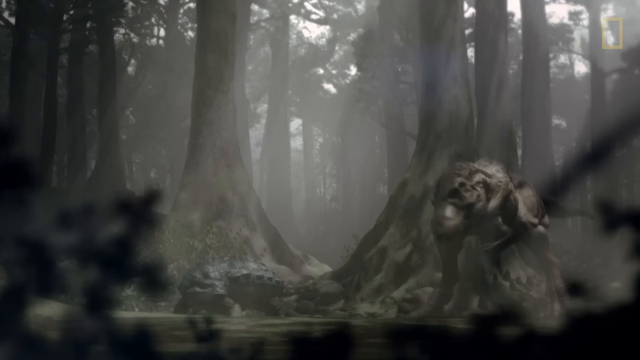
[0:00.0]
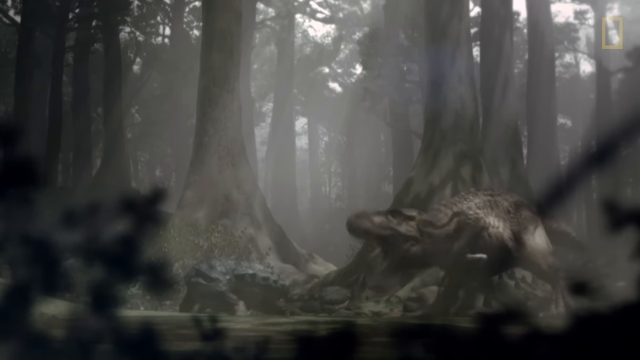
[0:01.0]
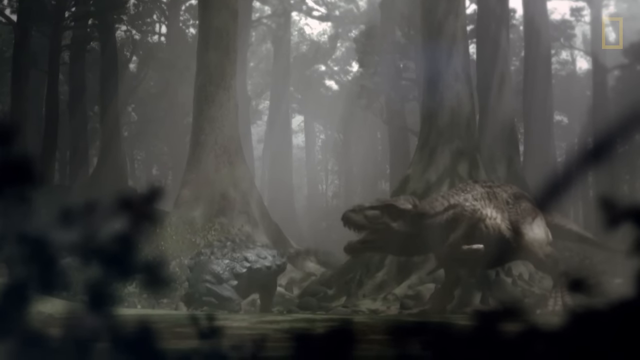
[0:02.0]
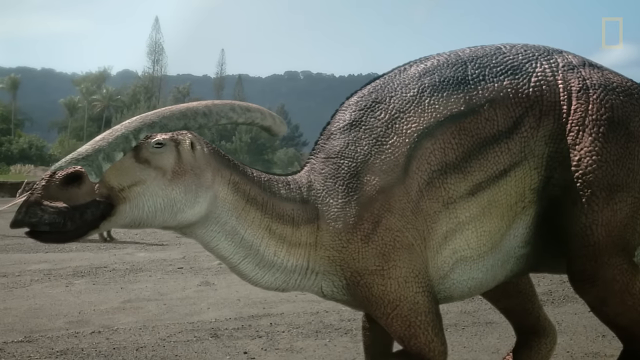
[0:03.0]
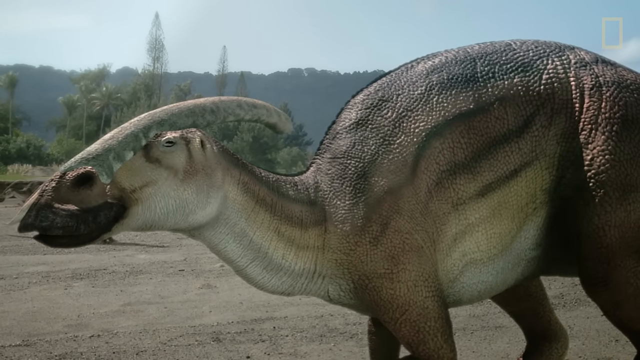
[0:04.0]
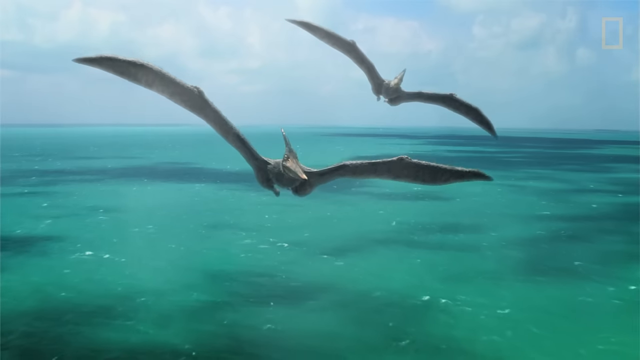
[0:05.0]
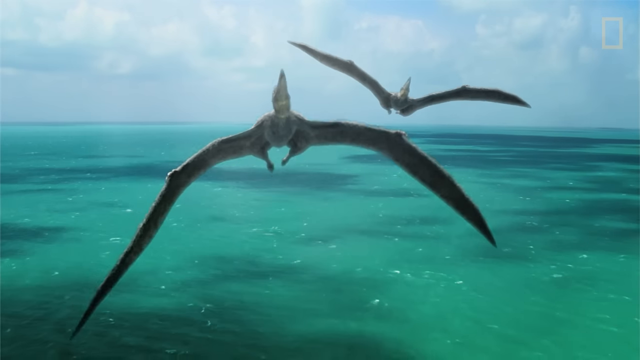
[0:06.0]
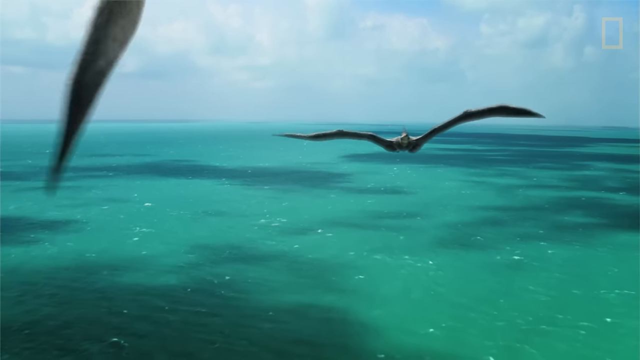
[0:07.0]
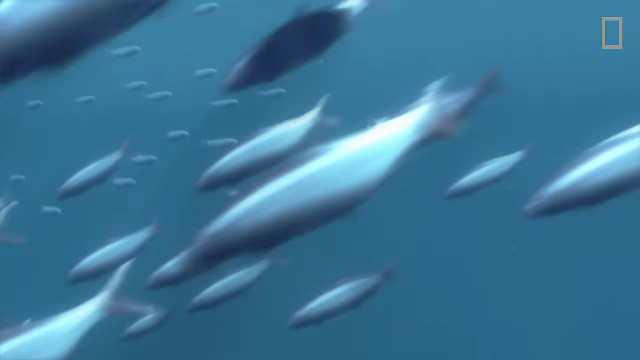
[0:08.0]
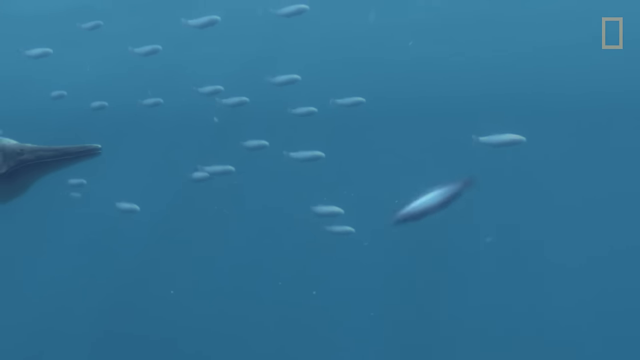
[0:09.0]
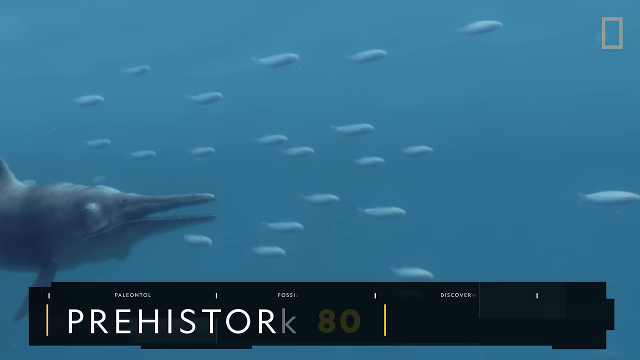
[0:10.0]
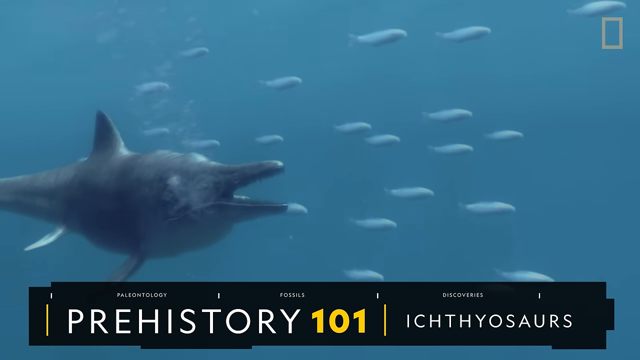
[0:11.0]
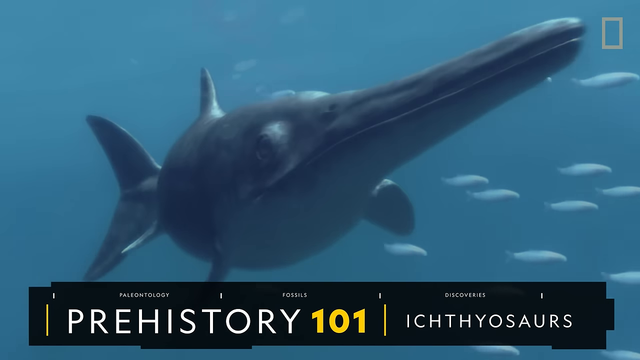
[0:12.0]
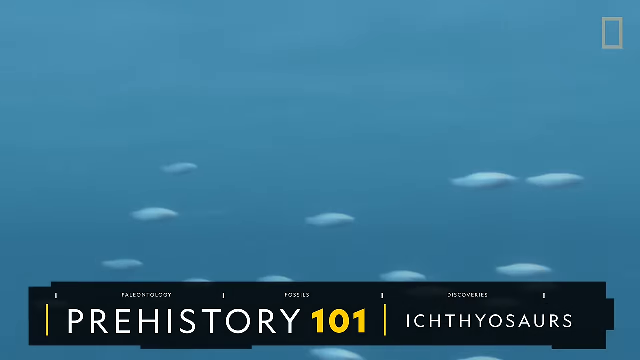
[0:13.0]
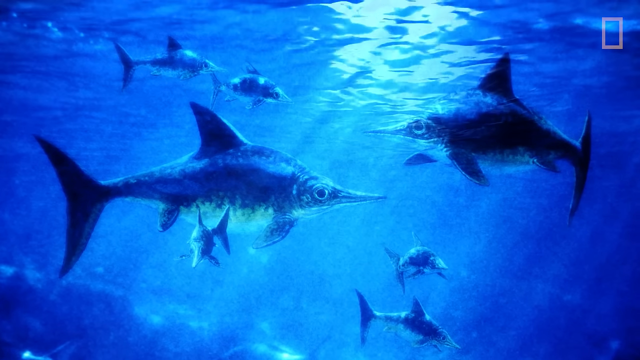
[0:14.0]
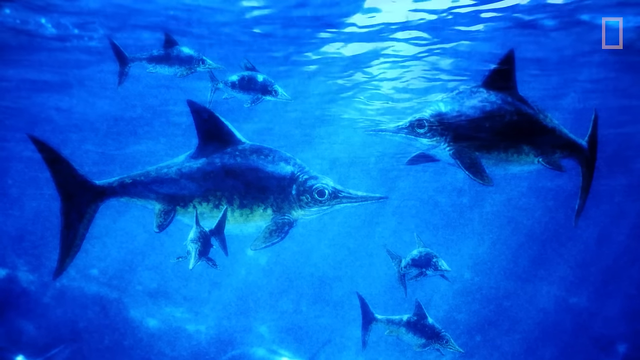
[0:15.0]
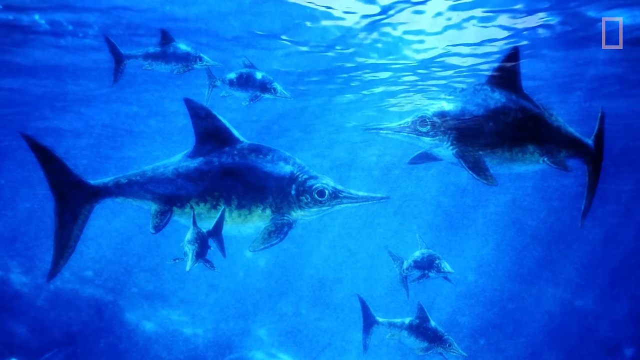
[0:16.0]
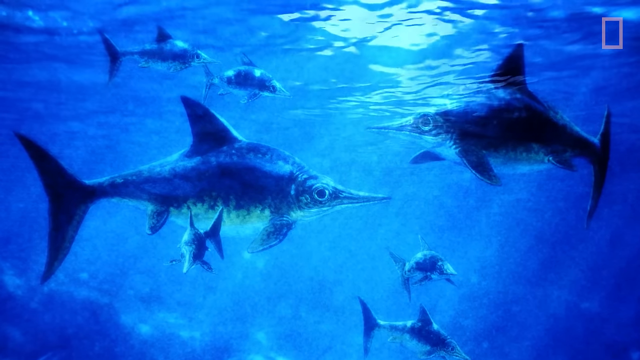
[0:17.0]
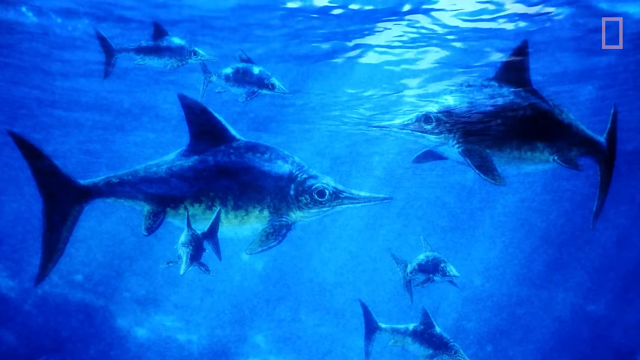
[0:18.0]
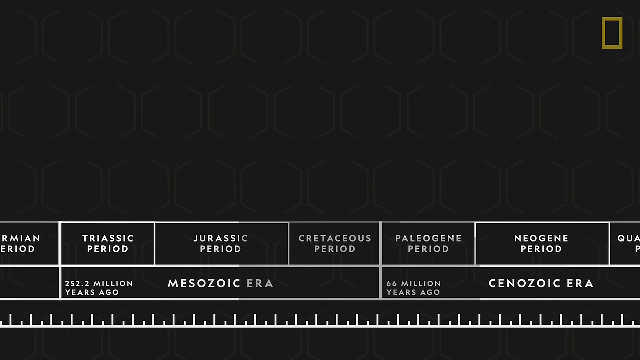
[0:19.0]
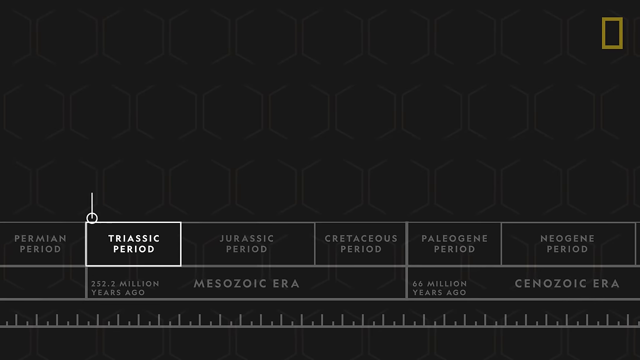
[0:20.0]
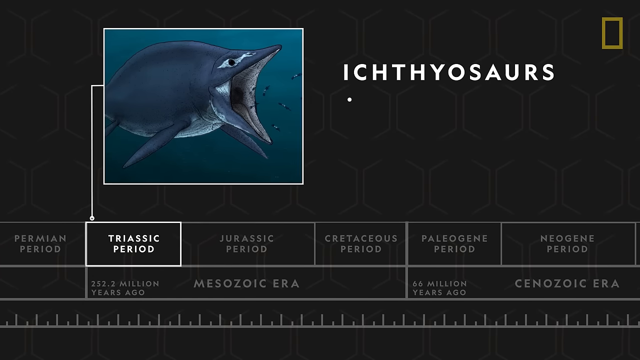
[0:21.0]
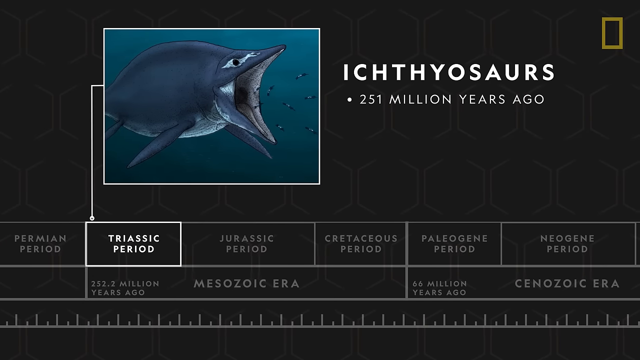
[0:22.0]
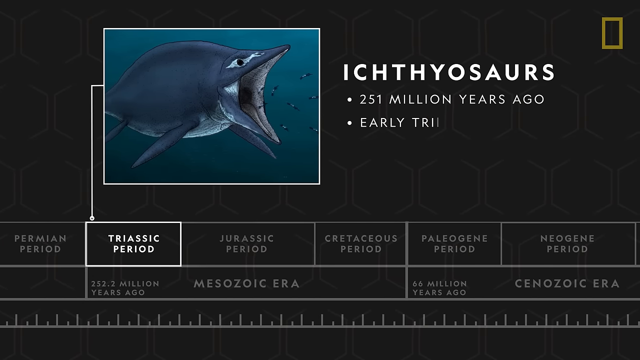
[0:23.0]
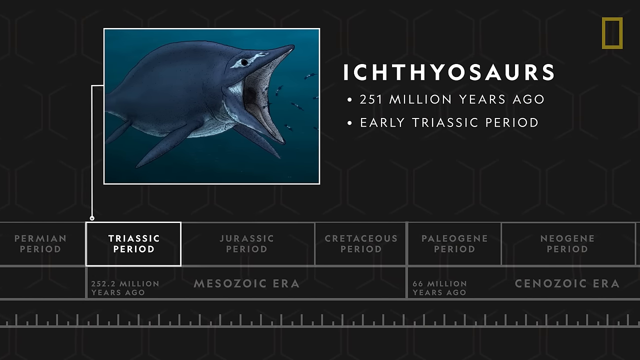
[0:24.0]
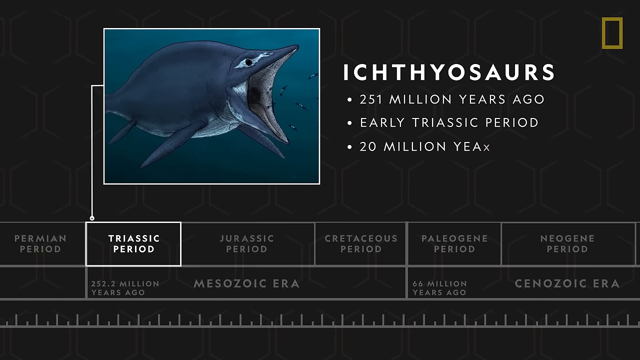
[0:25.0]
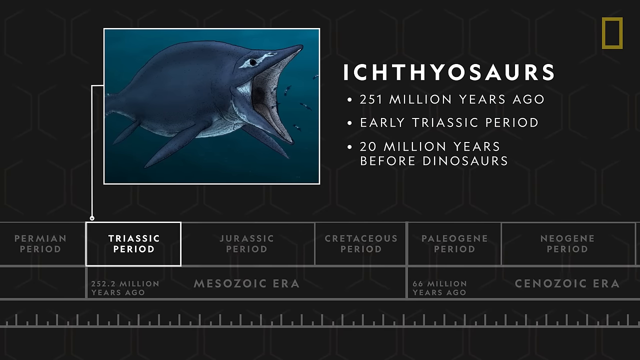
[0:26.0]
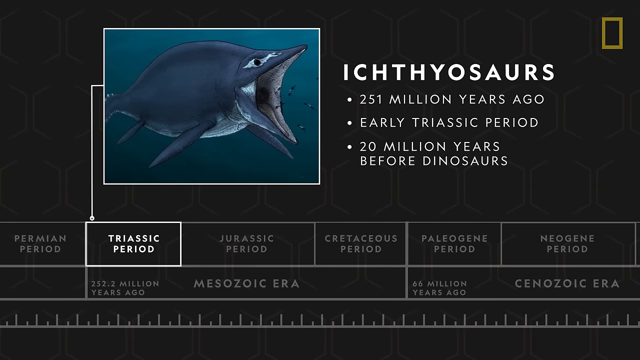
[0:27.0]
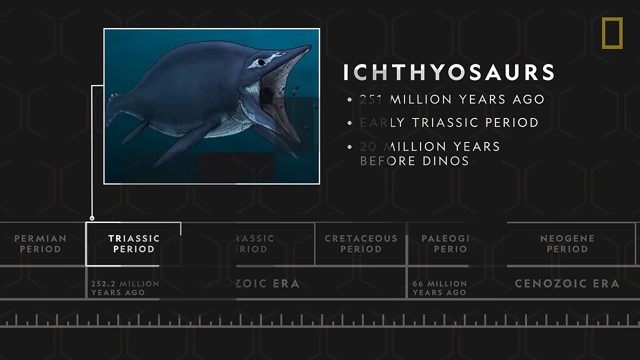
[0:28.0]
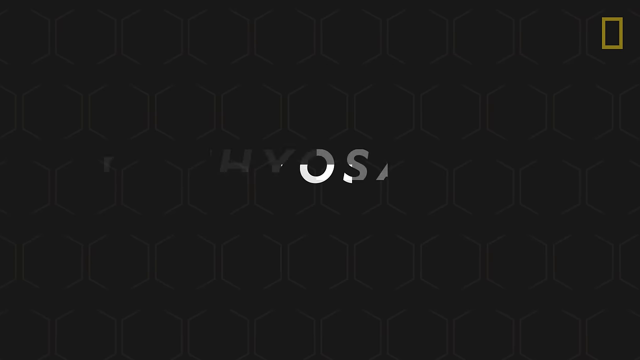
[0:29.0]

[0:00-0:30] In a 3D animation, a T-Rex roars towards the left in a very dense, thick ancient forest. It is facing off against an ankylosaurus, which waves its large bulbous tail at the T-Rex as it roars. The footage cuts to a different dinosaur with a large, sort of tubular shape on its head; it has a beak and turns its head slightly to the left. Next, two pterodactyls fly over a large coral reef. A 3D animation follows of multiple fish swimming from right to left, then a bigger school of fish swimming from left to right, fleeing from a large dolphin-like dinosaur. The video changes to a still artist's rendition of large fish with small pointed beaks, bulbous bodies and multiple fins, including large, strong, triangular fins on the back. A water effect is added to make it look like moving water, but it is clearly 3D. A black screen then appears with a sort of calendar period measurement tool along the bottom. It moves through various periods and highlights one labeled "Triassic Period". A line comes out from this section and shows a drawing of a large fish-like dinosaur with its mouth wide open, moving towards the right and sucking in smaller fish. The picture is labeled "the Ichthyosaurs", "251 million years ago", "early Triassic Period", "20 million years before dinosaurs".